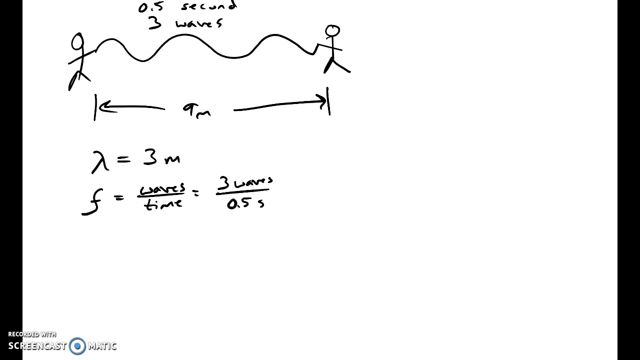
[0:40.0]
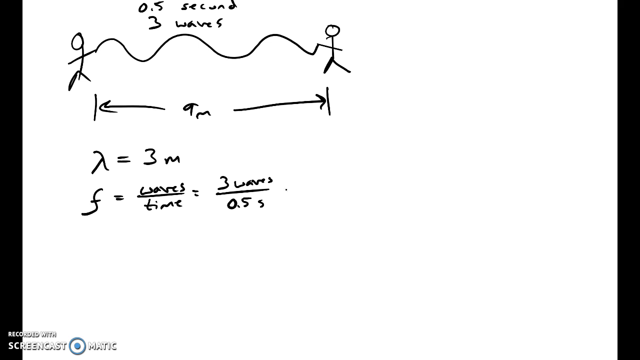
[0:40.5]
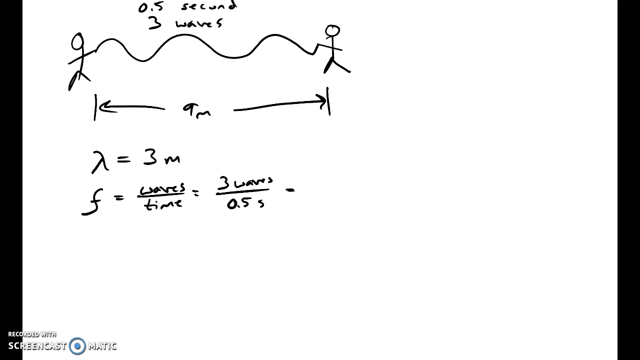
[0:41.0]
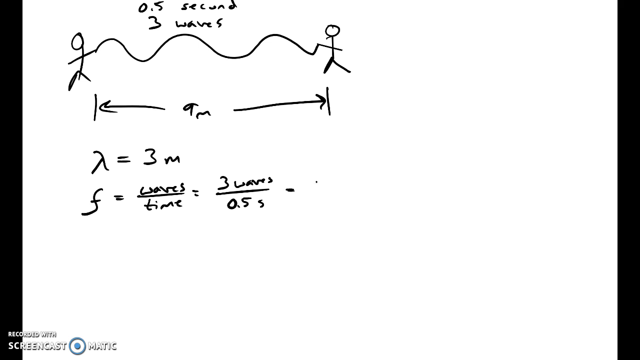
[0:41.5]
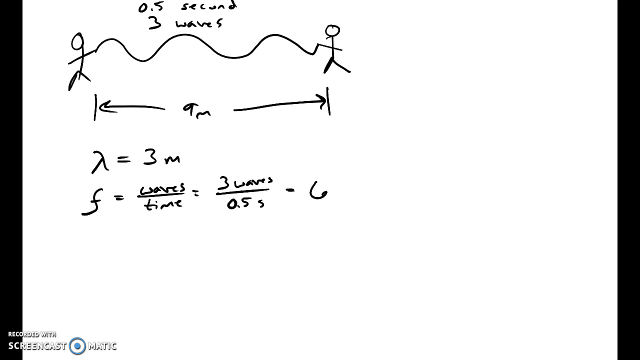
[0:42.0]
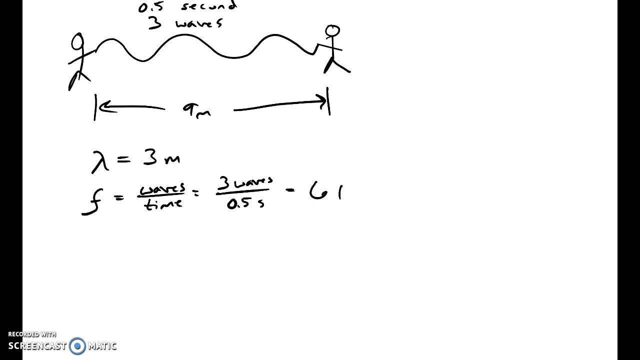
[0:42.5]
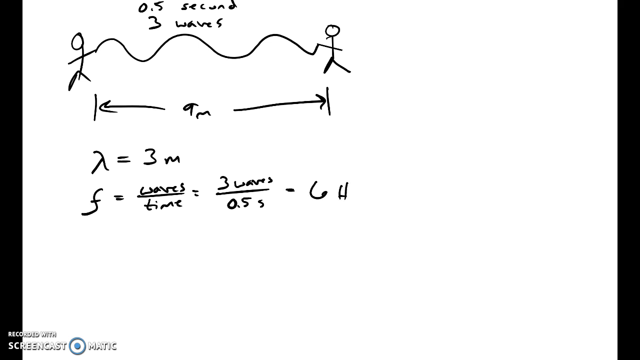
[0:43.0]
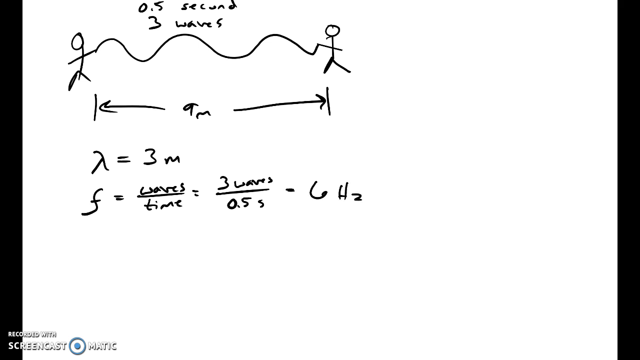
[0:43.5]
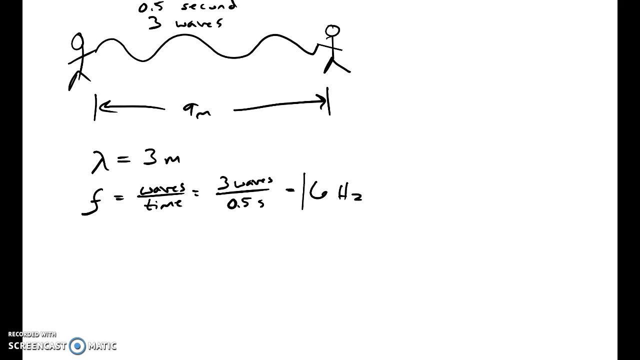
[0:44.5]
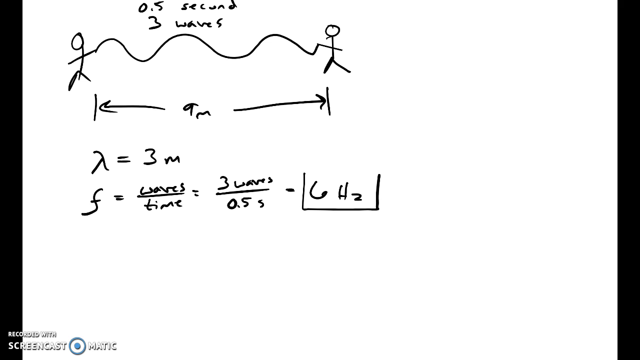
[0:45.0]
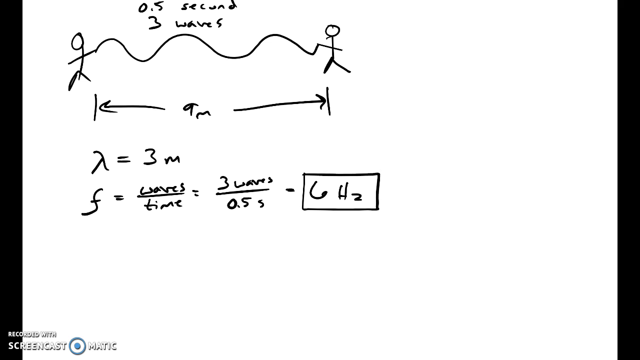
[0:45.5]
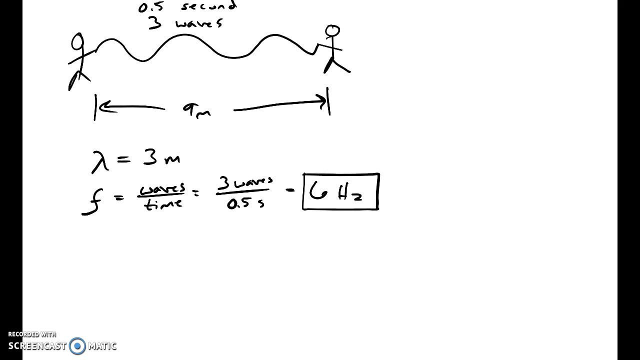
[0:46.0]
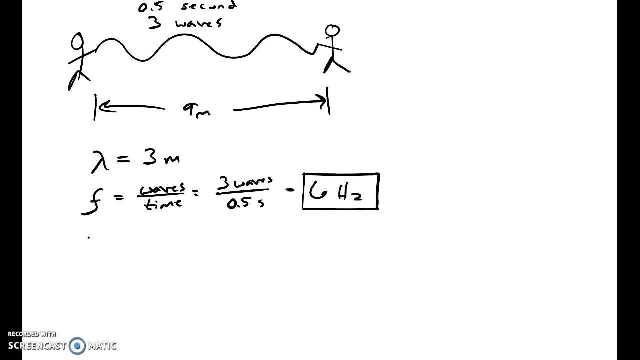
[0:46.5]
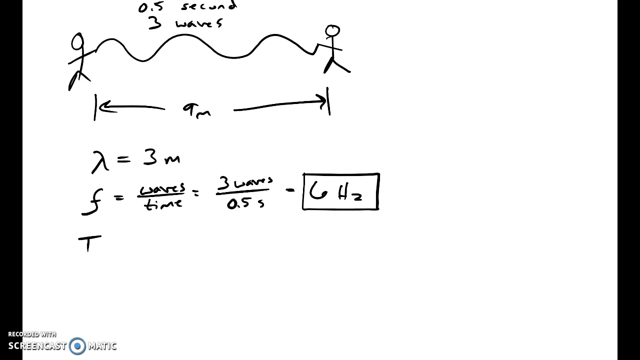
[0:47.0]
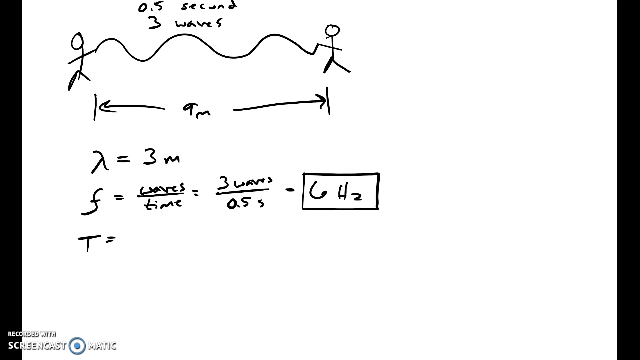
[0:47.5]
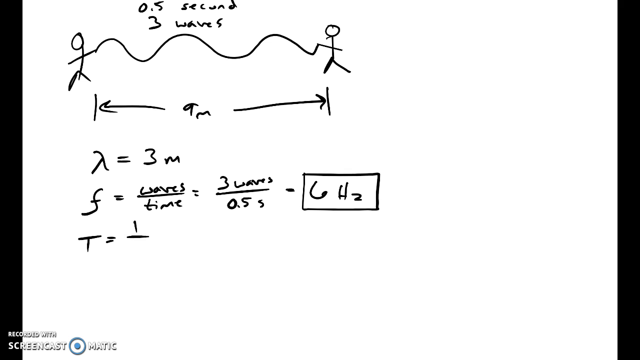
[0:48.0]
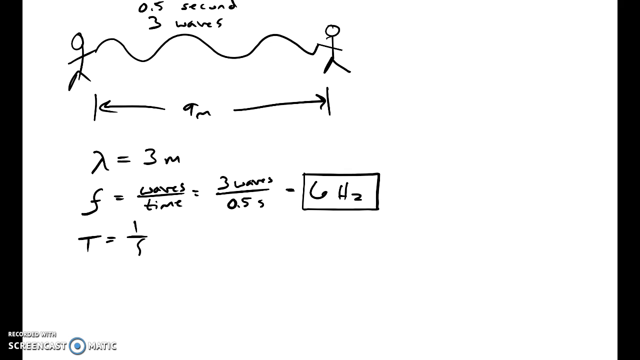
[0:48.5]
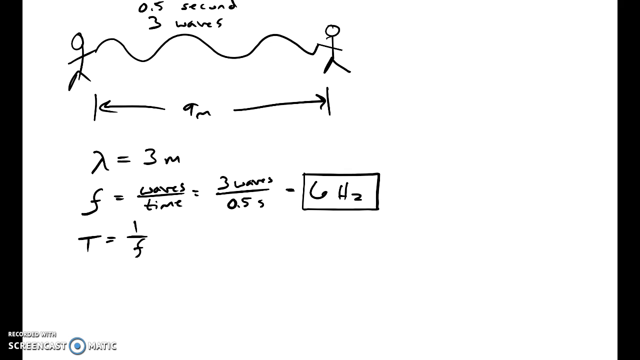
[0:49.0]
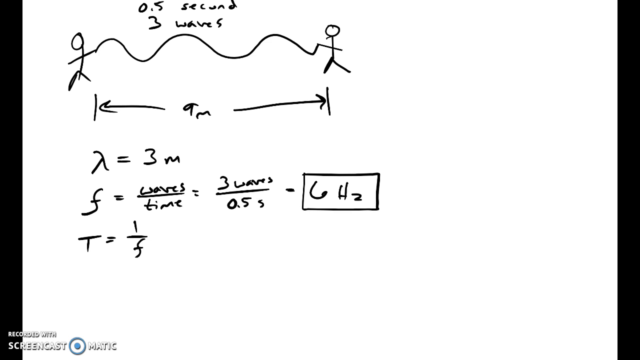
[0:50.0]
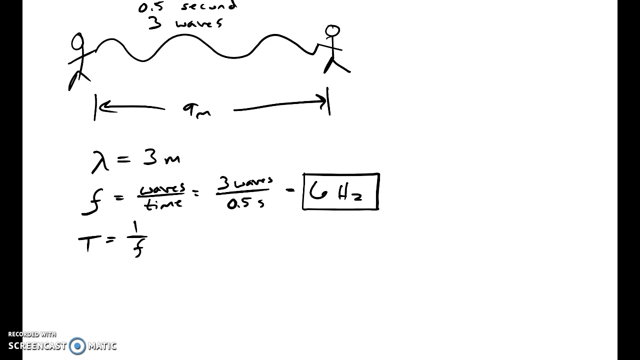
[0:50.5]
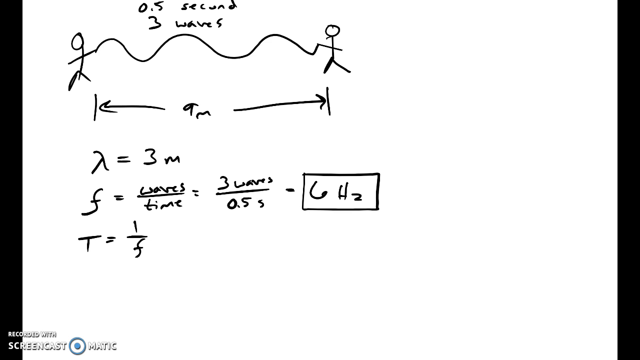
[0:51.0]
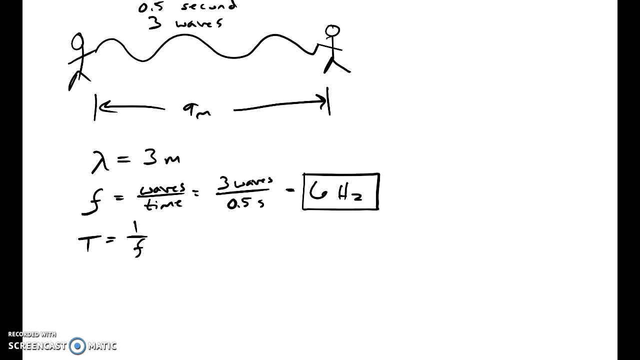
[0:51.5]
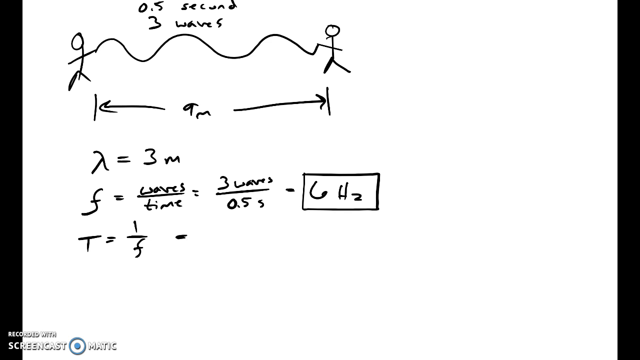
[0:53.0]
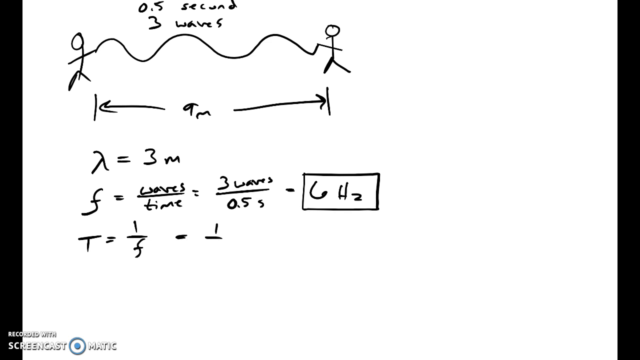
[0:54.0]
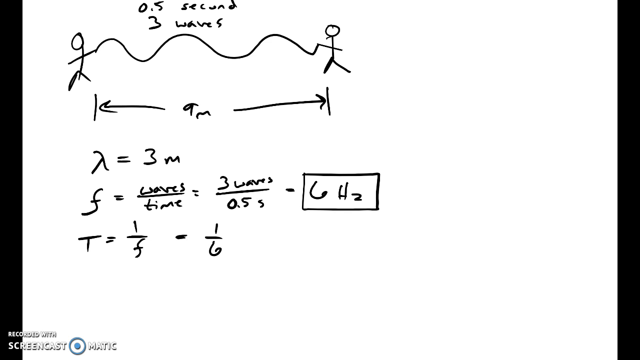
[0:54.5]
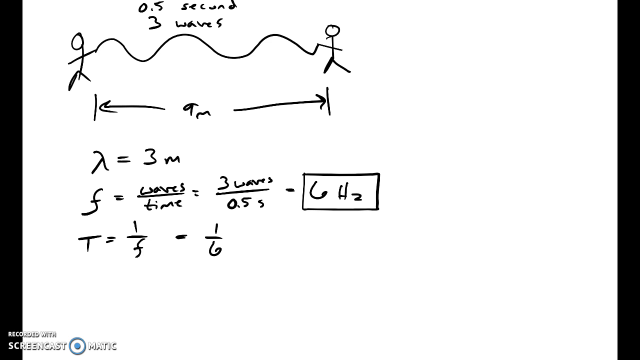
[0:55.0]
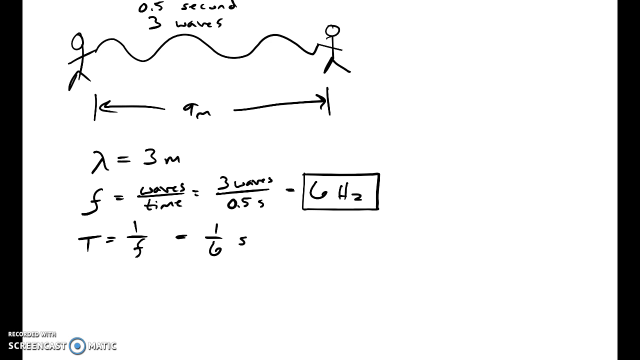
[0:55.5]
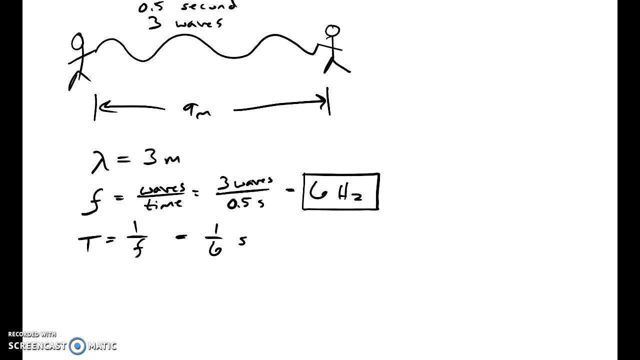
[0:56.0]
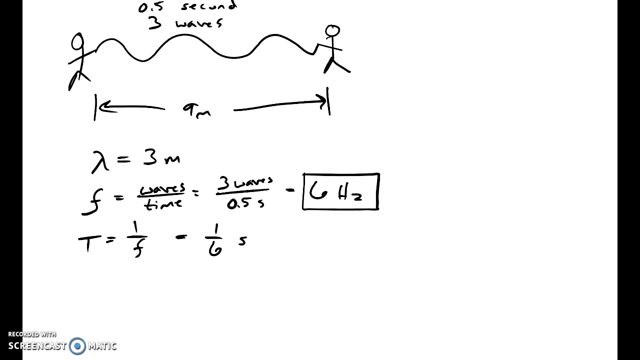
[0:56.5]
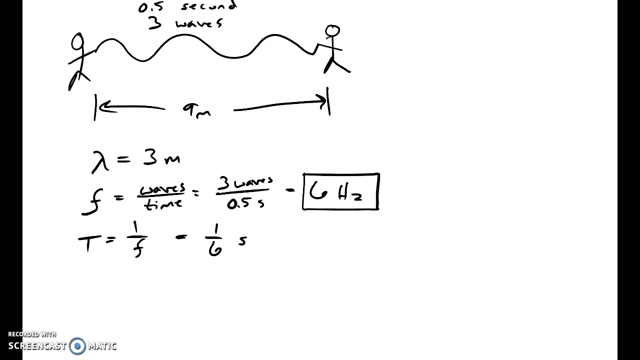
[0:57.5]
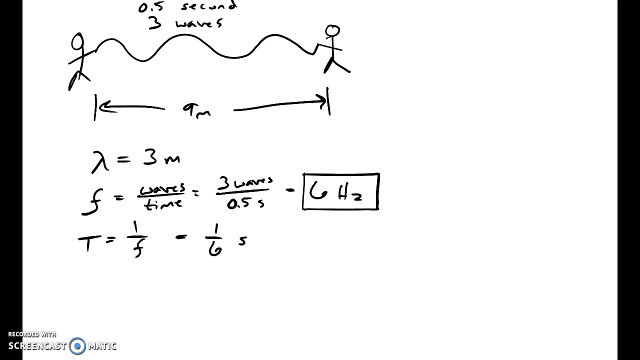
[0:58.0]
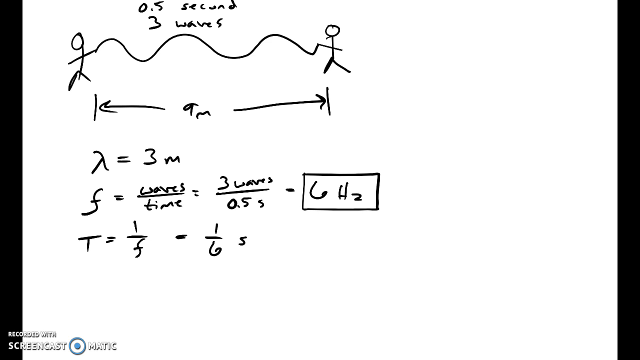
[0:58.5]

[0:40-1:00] The same screen shows "0.5 second", "three waves", the two stick figures with a squirrely line connecting them, the two lines with arrows pointing in either direction with "9m" between them, and a formula below that in which an unknown figure equals 3m. Then comes what appears to be F equals waves, underlined, over time, equals three waves, underlined, over 0.5s. Next to that, someone writes "6 HZ" and draws a square around it. Below that, in black, they write T equals 1 over F, followed by what seems to be equals (possibly minus, hard to tell) 1 over 6 s. The writing is smooth and natural, with no visible glitches. Everything is in black ink on a white background, and the page holds a bunch of formulas.